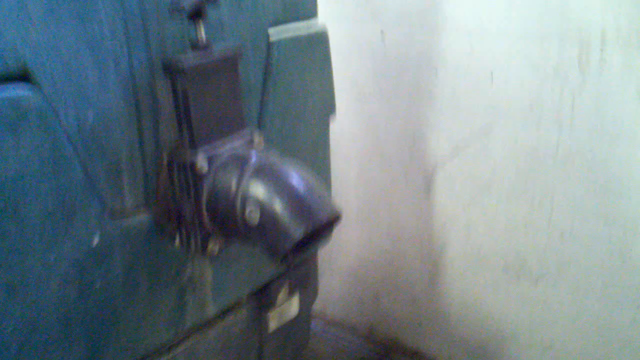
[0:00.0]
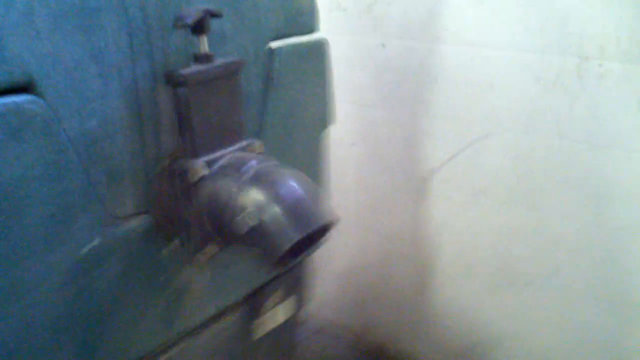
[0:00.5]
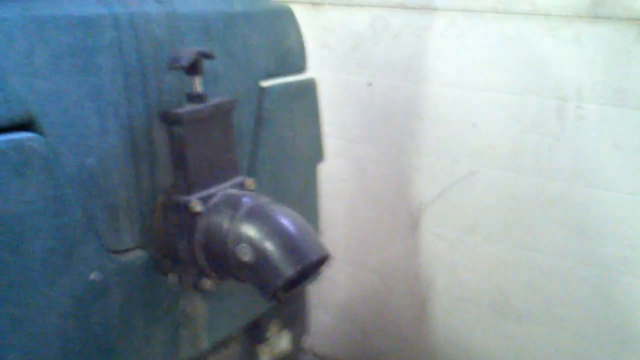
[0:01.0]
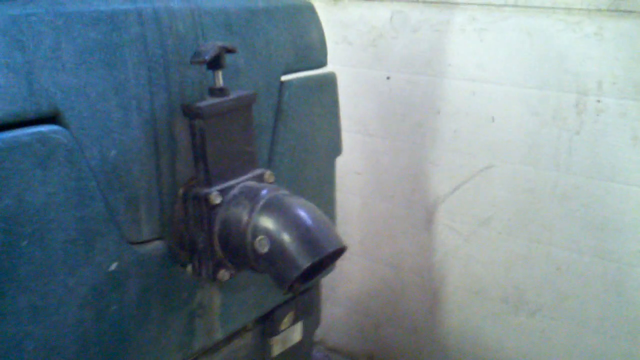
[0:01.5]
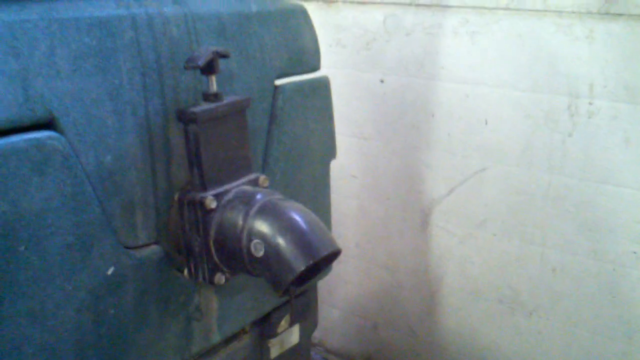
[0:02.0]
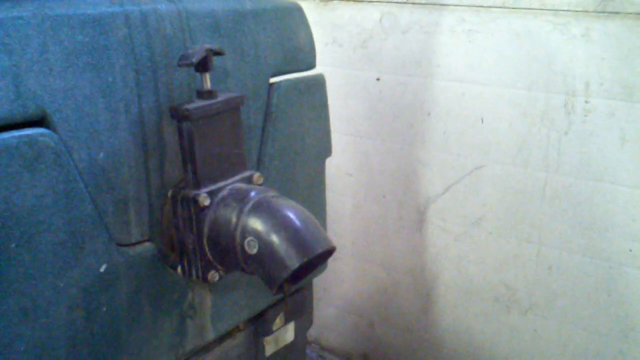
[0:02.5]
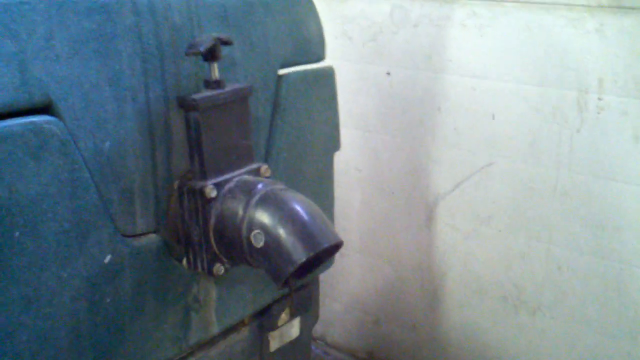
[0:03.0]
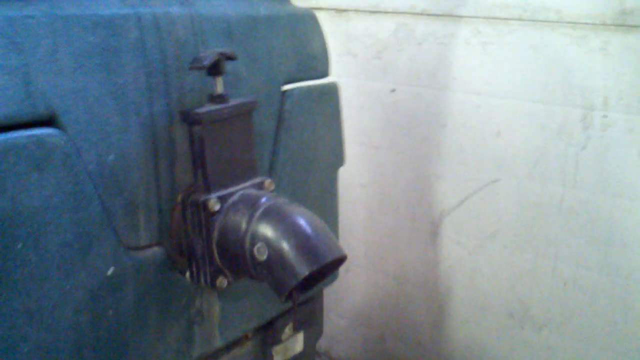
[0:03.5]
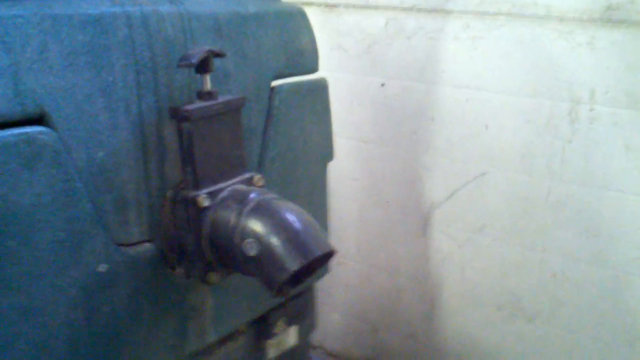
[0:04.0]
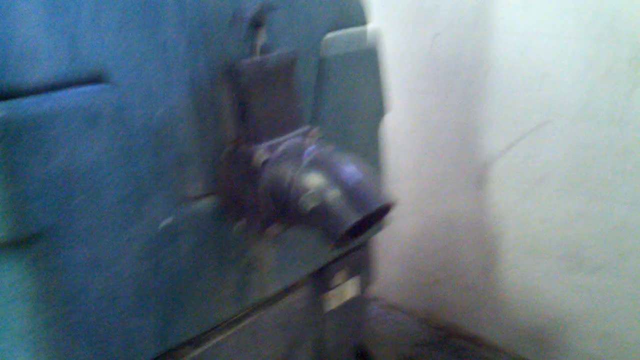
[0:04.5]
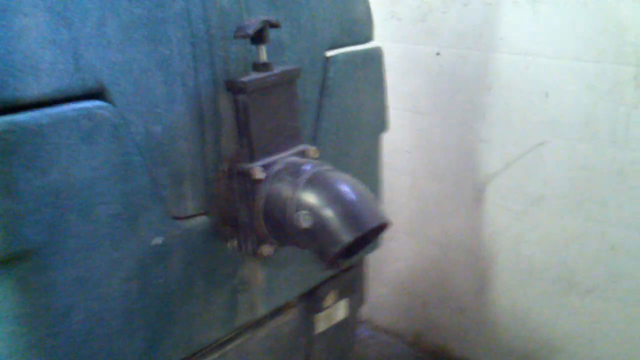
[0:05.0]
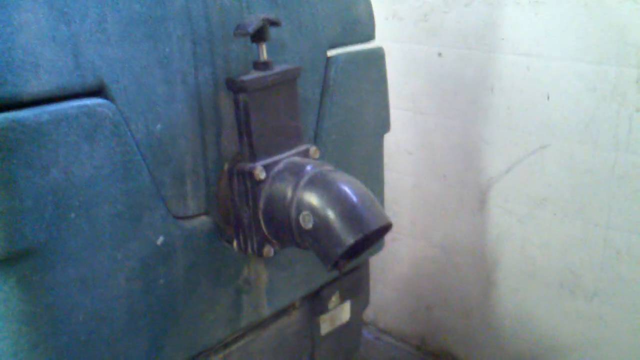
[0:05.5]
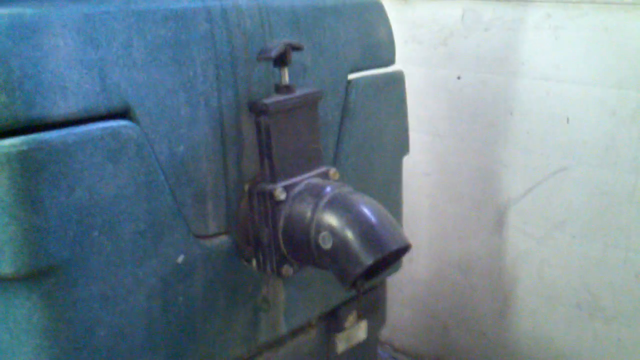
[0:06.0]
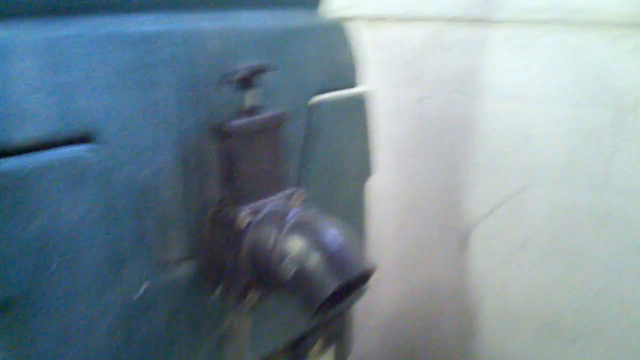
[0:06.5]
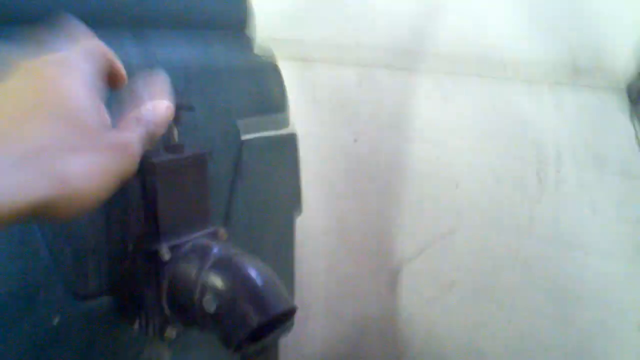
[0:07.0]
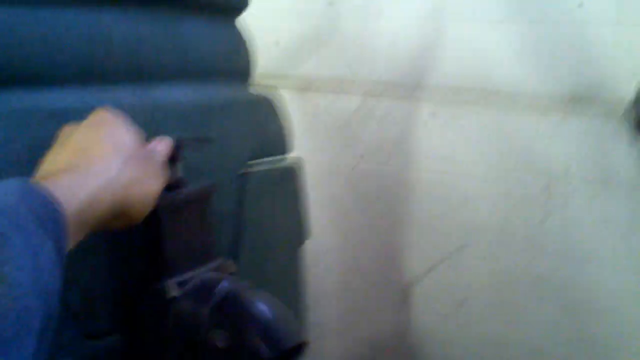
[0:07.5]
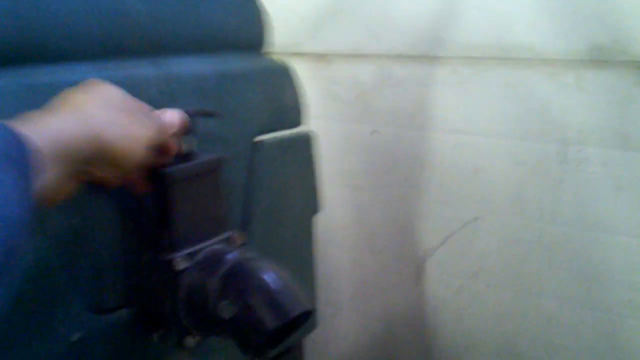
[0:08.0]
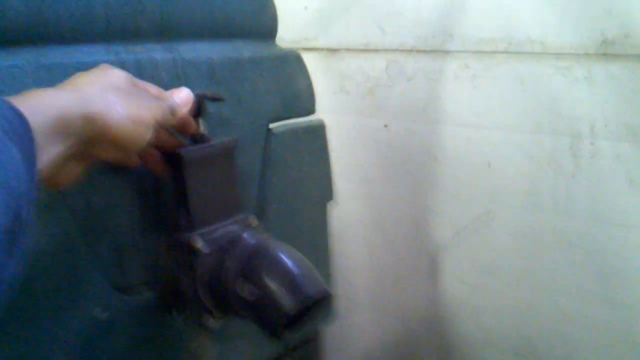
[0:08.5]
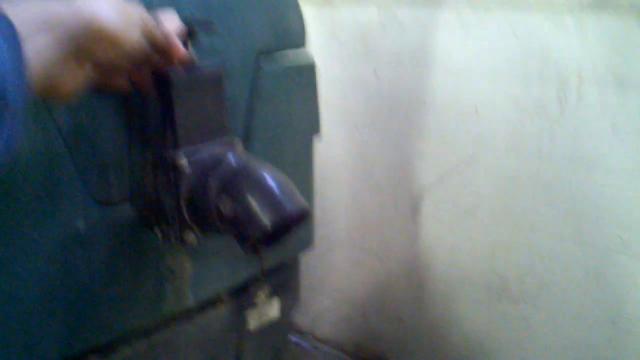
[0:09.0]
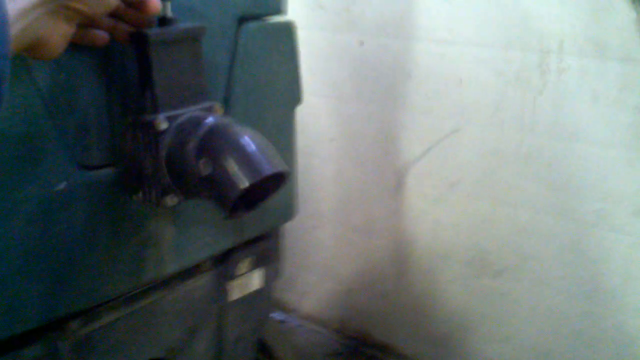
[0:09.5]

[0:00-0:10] A valve on the side of some type of tank is shown. There is a twist valve on it, and a person reaches in and puts their fingers on the twist valve part of the device. What looks like a large black spigot is to the right of this. The tank appears to be large and dark blue, with a spigot attached to its side and a dial at the top of the spigot, which seems to turn on and off the flow of water or air; it is unclear whether the spigot releases fluid or air.